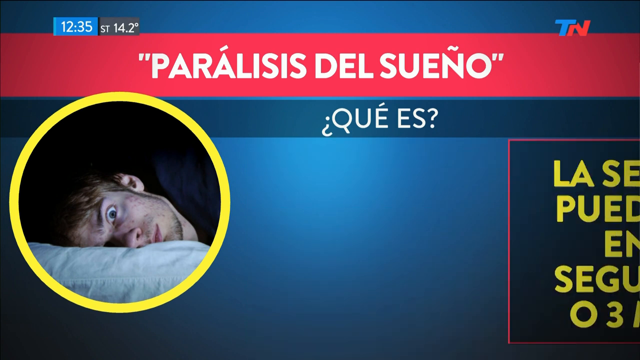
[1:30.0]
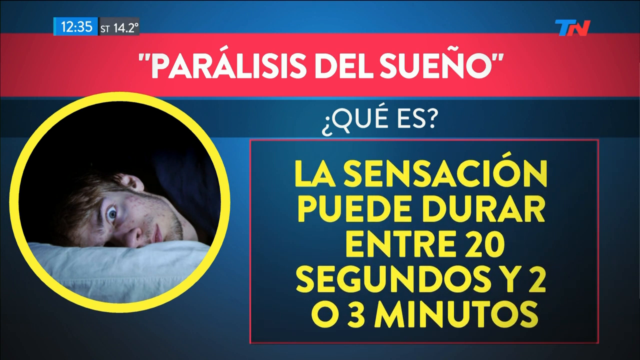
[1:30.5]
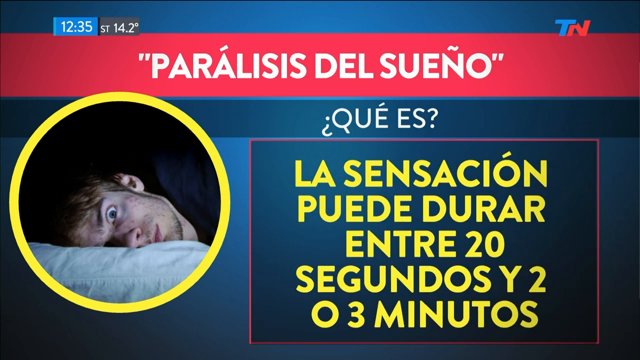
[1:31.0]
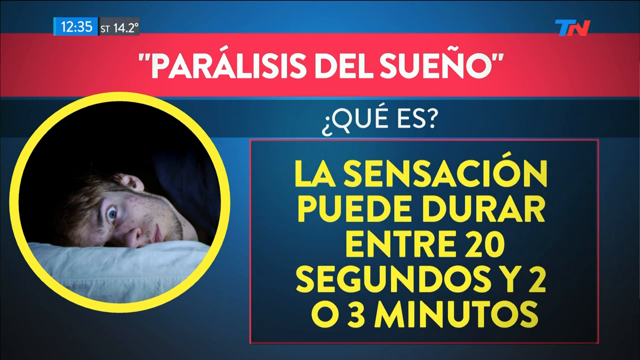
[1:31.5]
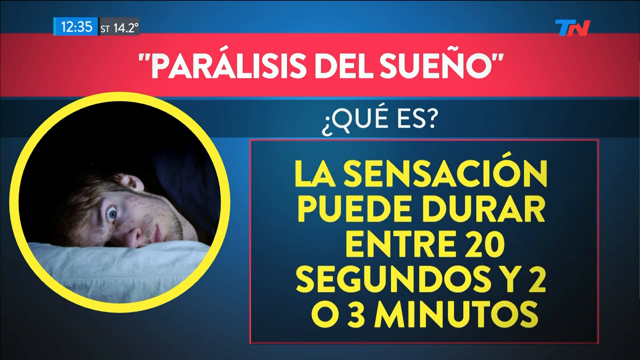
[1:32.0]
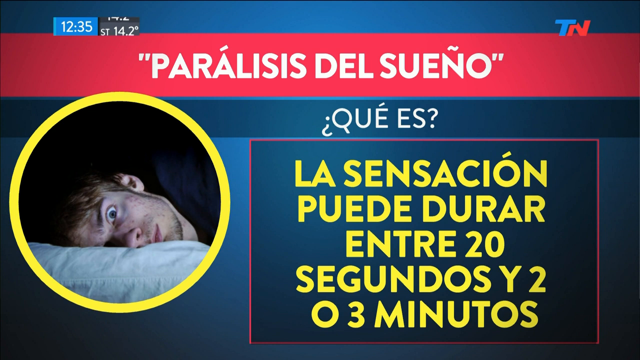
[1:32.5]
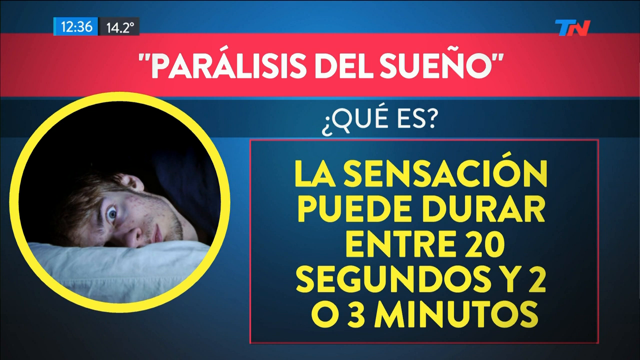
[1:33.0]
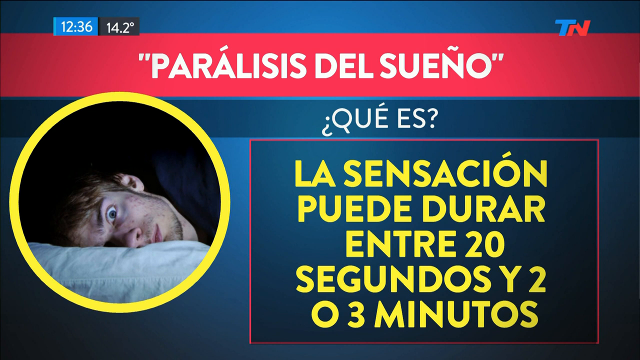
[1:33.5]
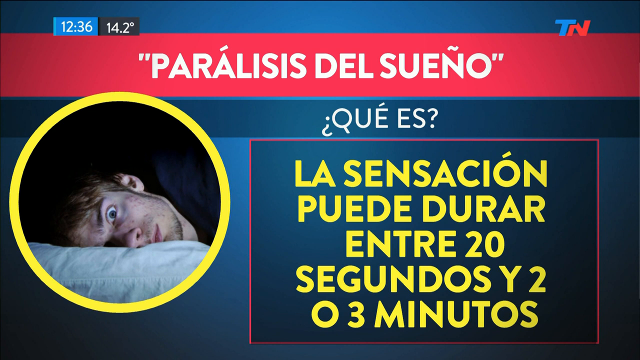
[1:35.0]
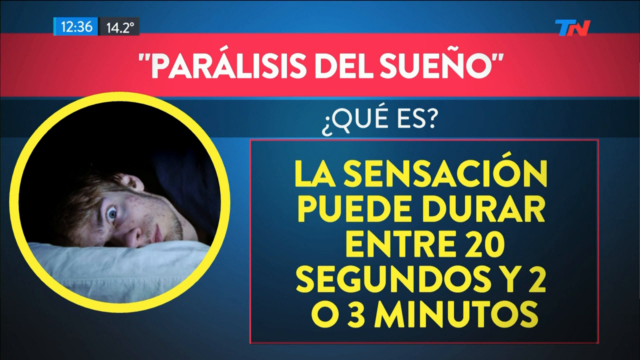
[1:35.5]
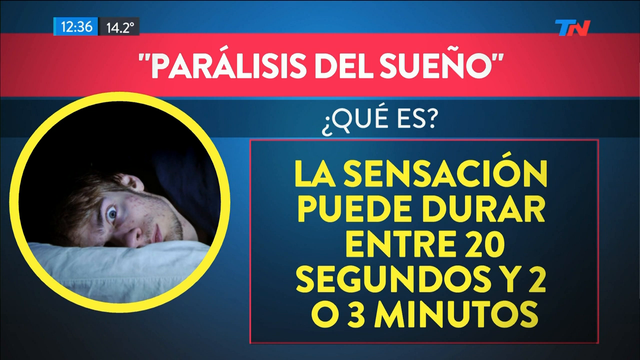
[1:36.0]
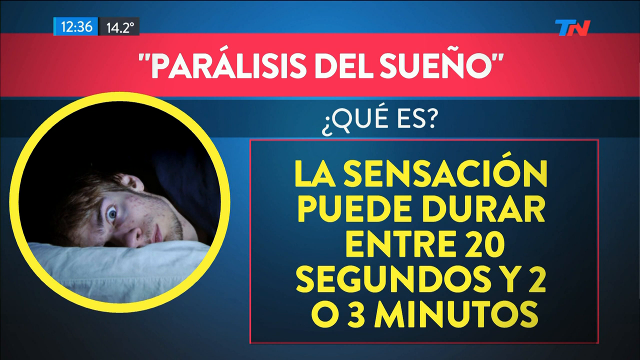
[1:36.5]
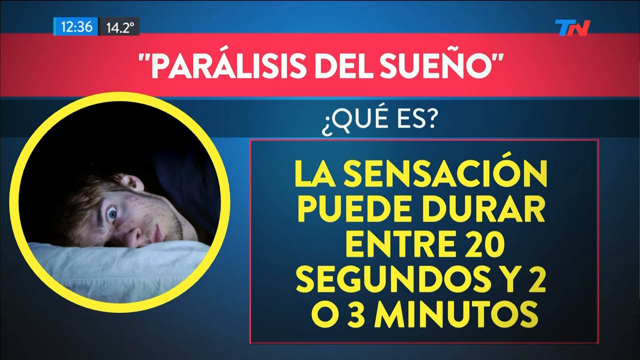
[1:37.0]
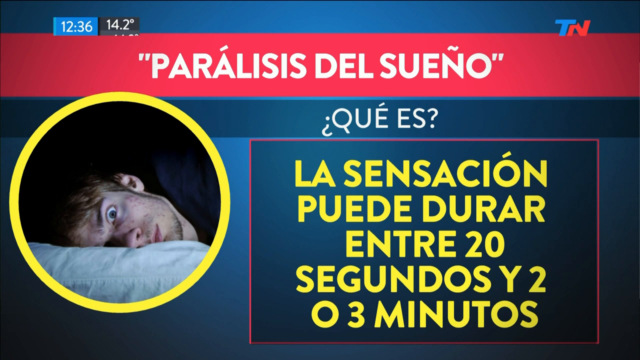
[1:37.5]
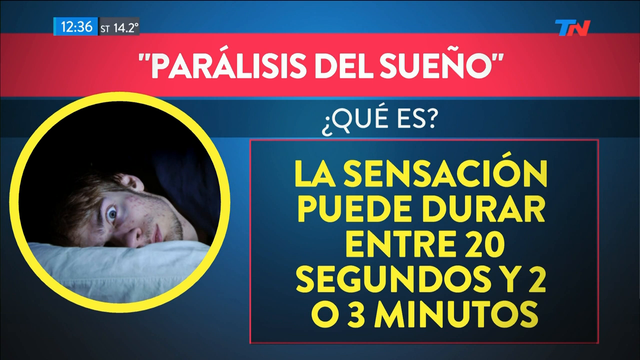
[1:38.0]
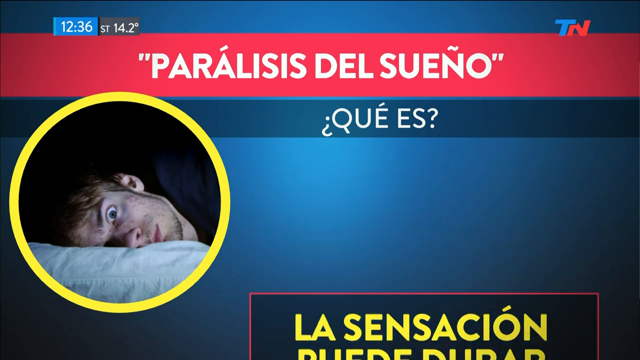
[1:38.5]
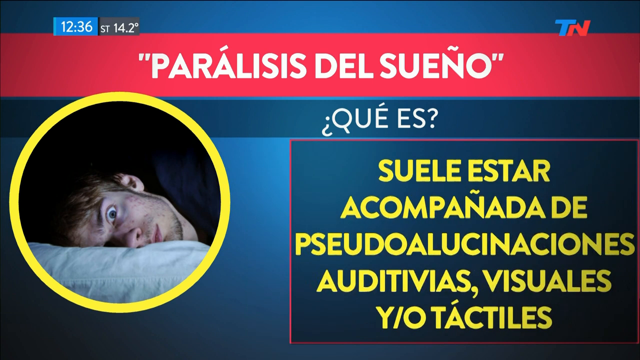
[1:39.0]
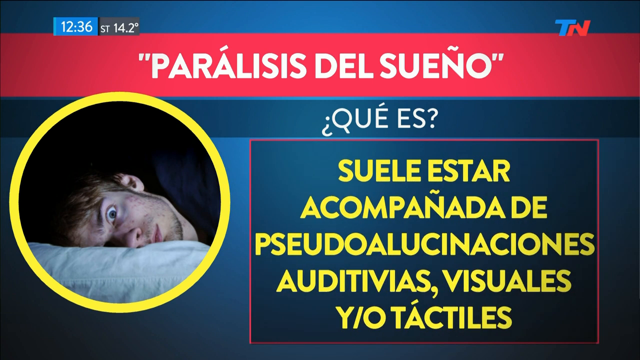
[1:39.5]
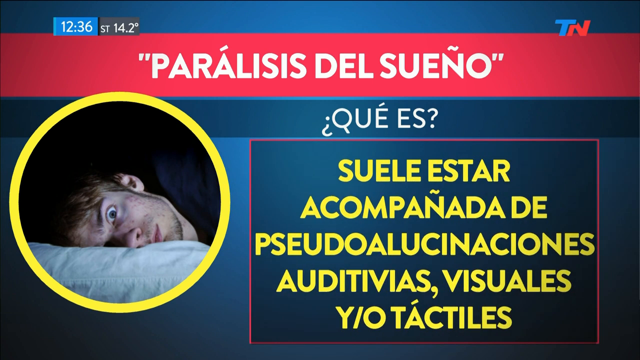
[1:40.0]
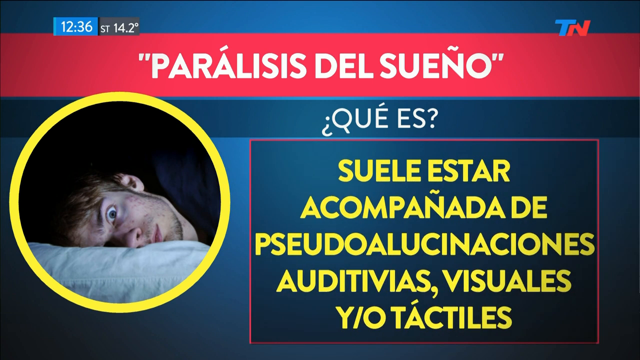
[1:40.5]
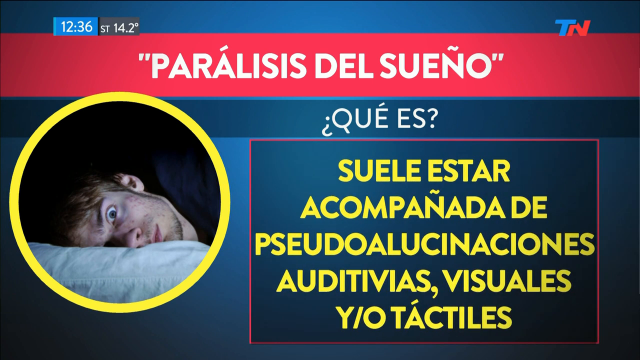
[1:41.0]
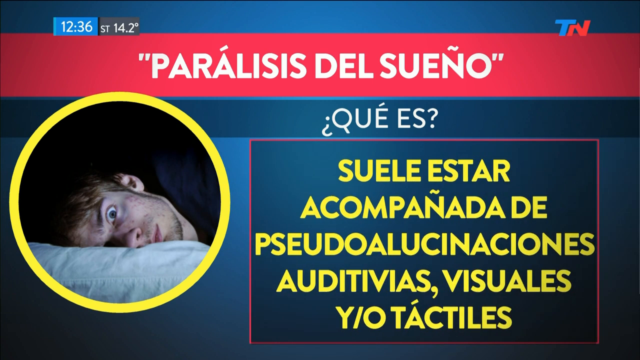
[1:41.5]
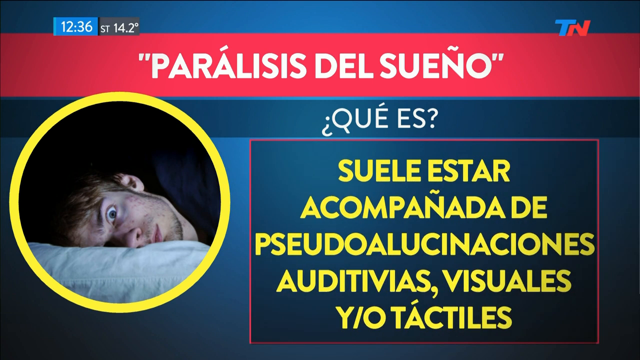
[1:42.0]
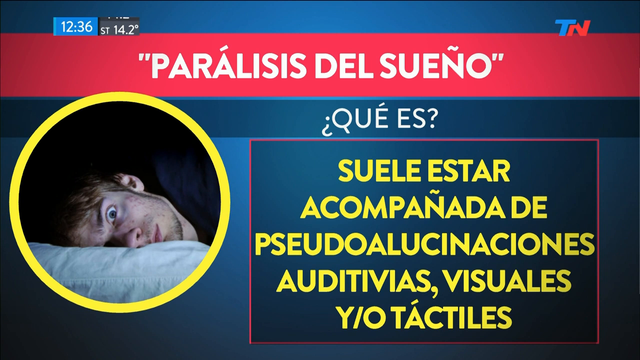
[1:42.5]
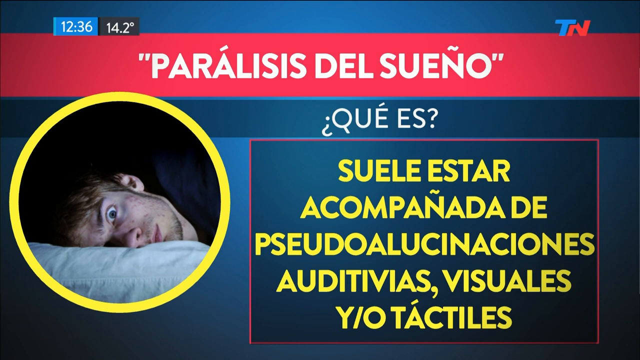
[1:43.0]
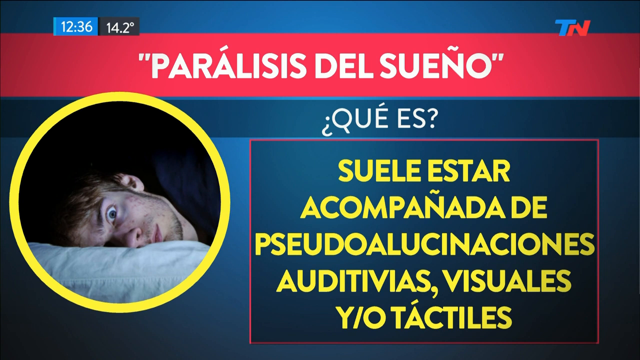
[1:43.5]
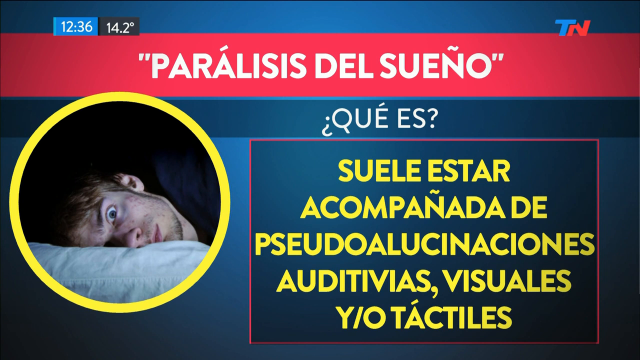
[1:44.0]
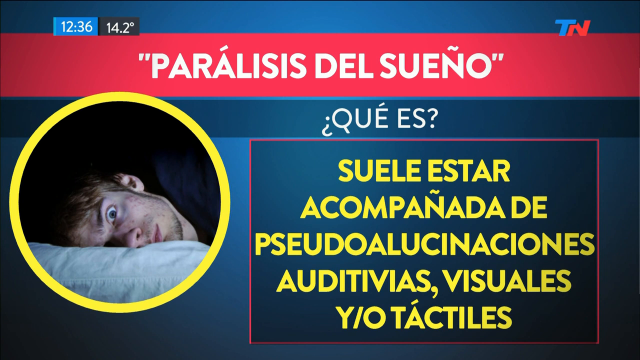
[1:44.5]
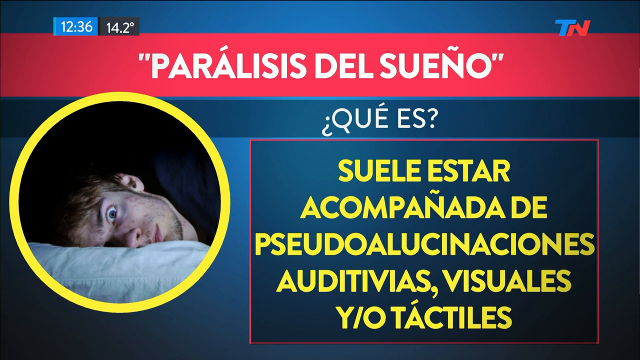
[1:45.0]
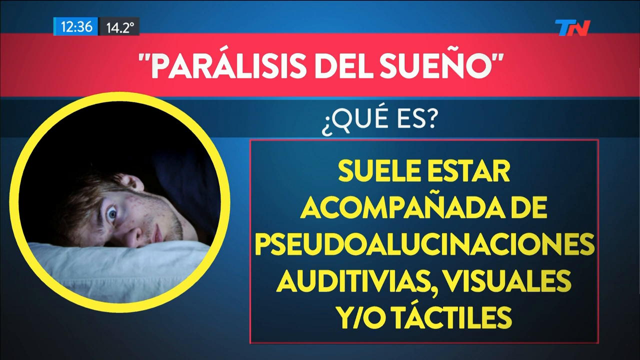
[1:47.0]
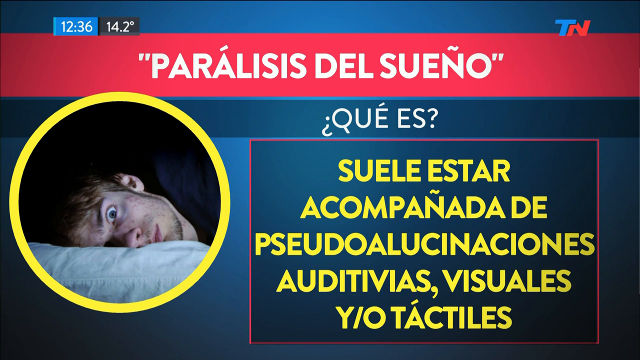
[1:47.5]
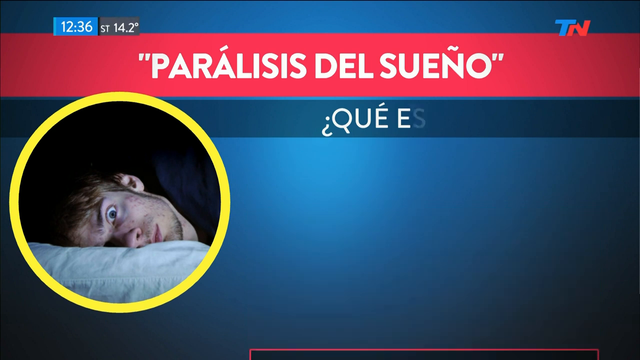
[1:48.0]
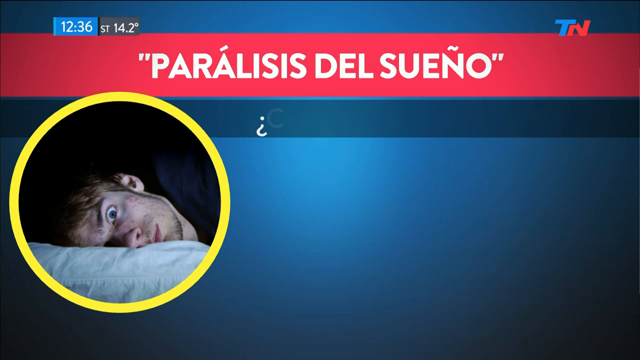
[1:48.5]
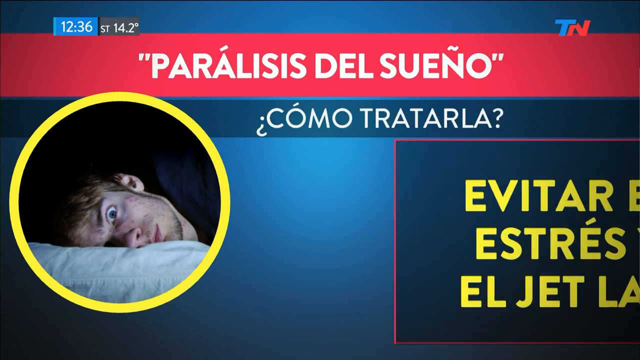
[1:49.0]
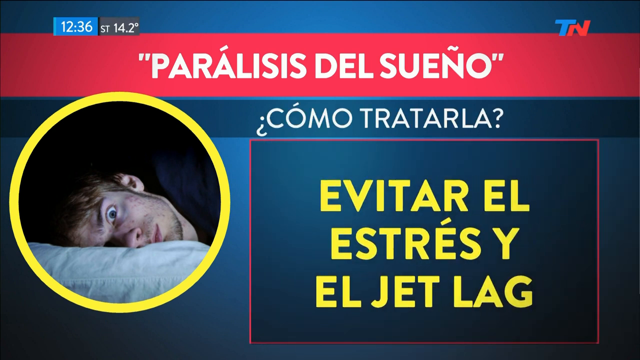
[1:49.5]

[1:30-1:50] The word paralysis is shown with a question mark. Hard-to-read text appears to list facts about sleep paralysis. A person is shown sleeping but with eyes wide open.